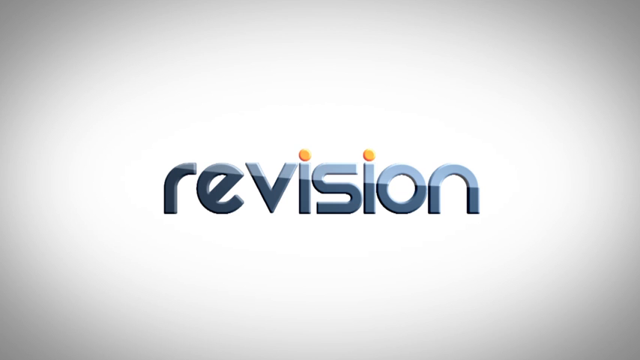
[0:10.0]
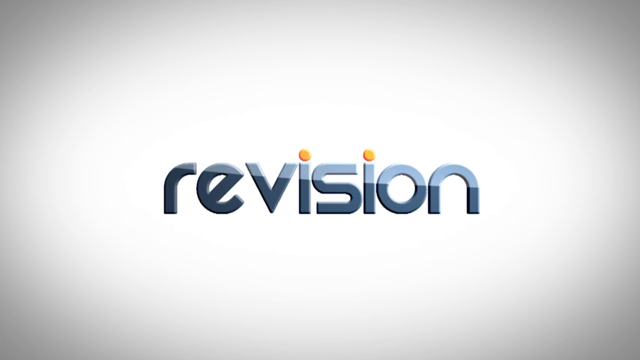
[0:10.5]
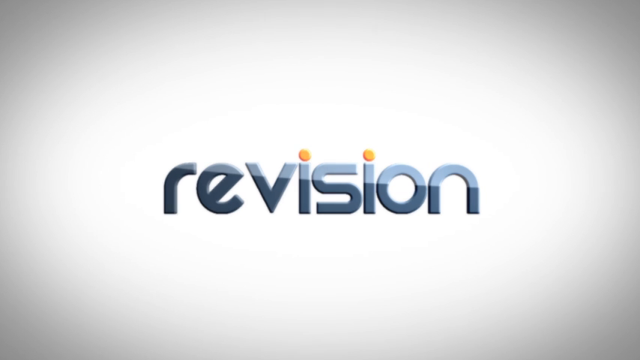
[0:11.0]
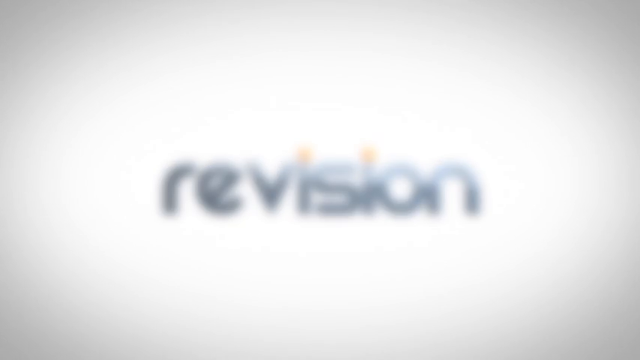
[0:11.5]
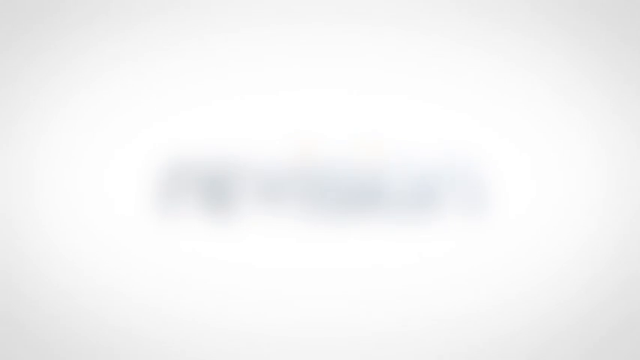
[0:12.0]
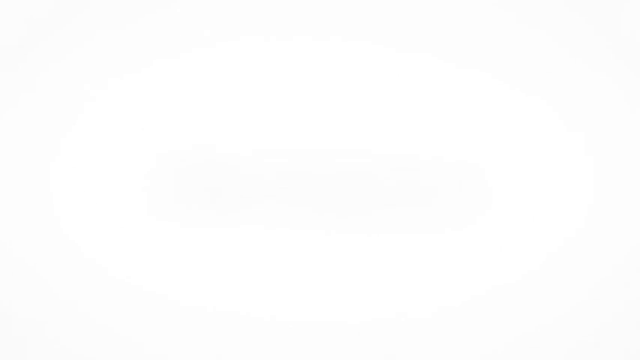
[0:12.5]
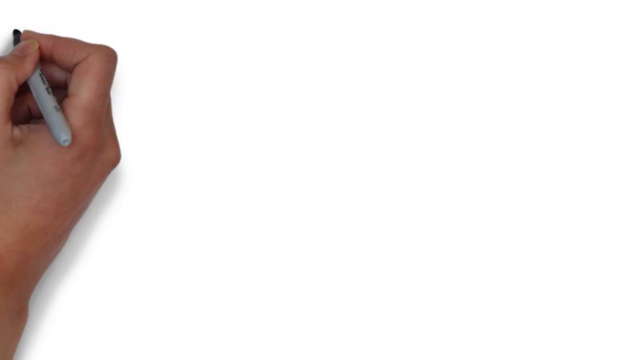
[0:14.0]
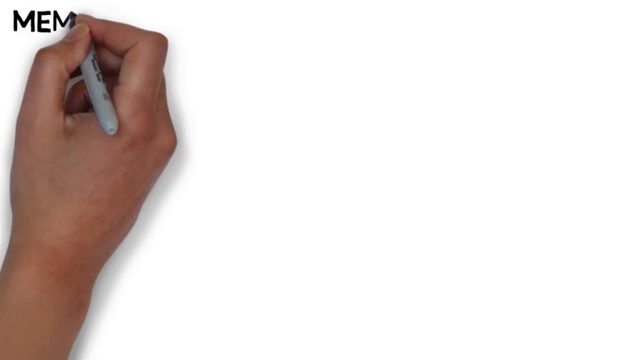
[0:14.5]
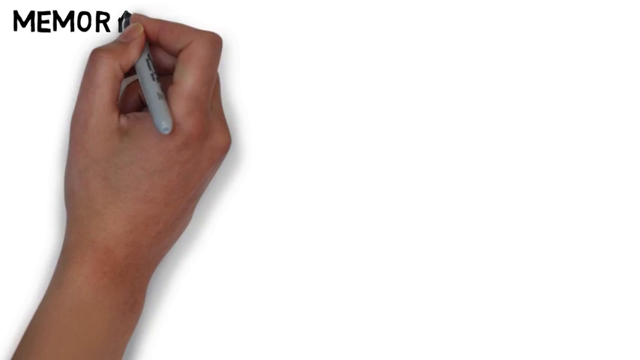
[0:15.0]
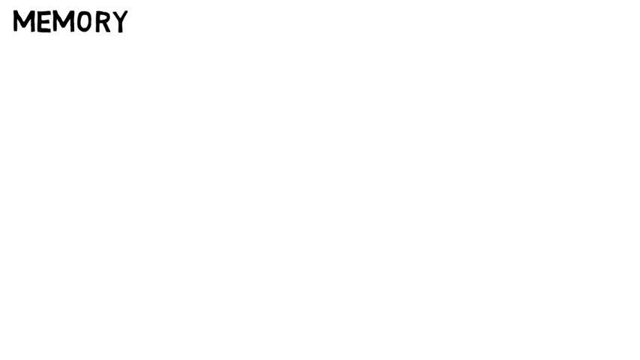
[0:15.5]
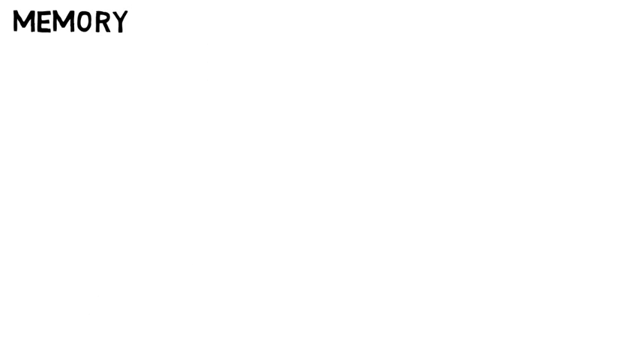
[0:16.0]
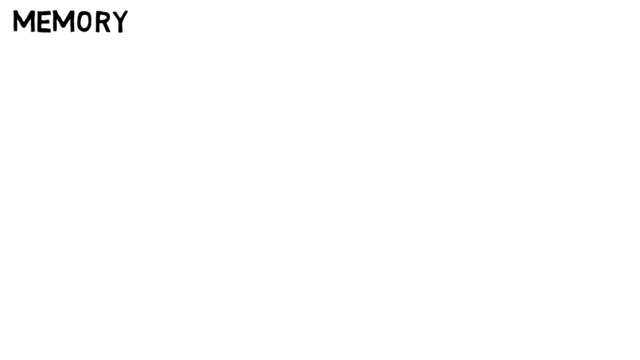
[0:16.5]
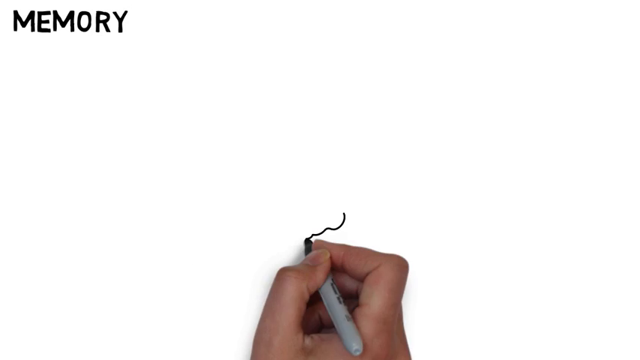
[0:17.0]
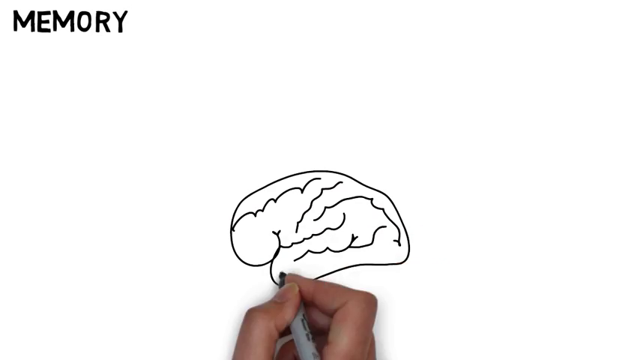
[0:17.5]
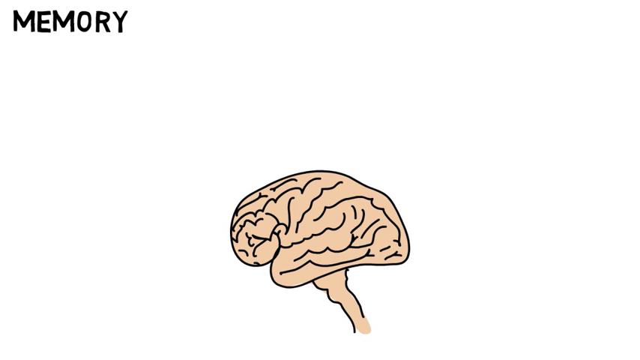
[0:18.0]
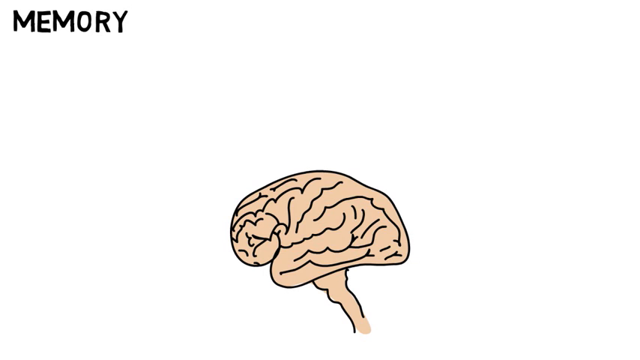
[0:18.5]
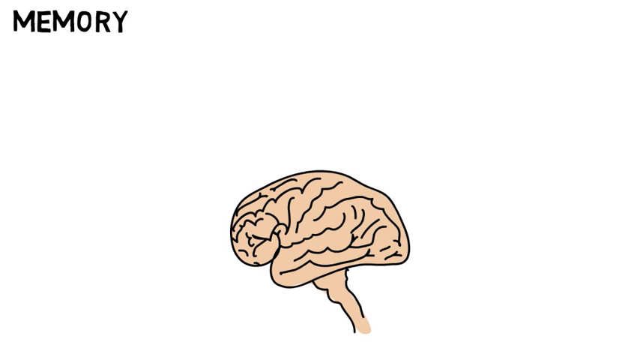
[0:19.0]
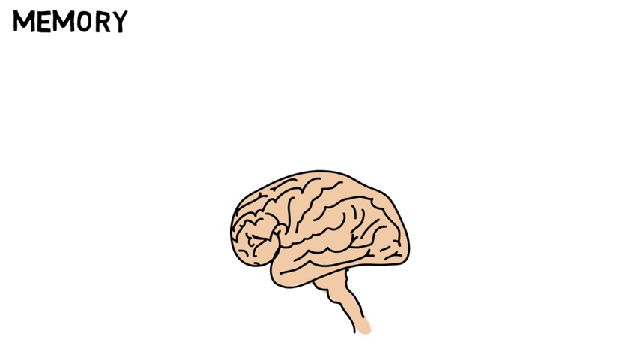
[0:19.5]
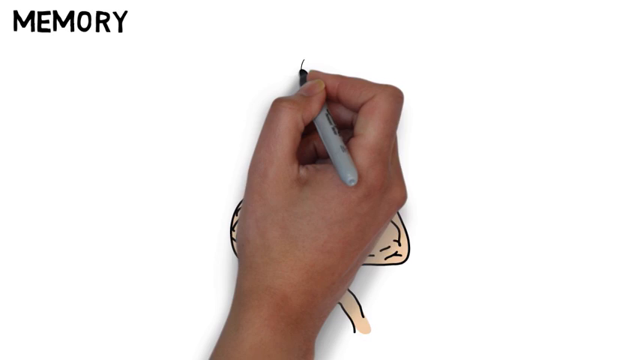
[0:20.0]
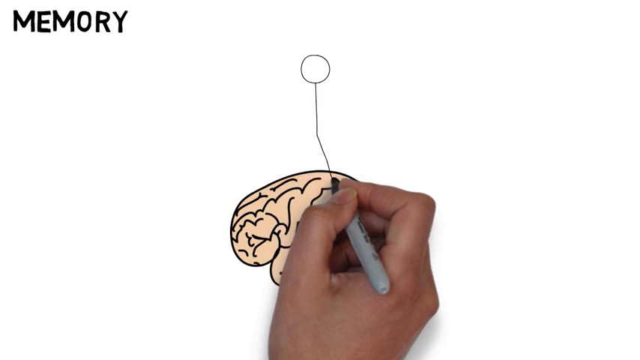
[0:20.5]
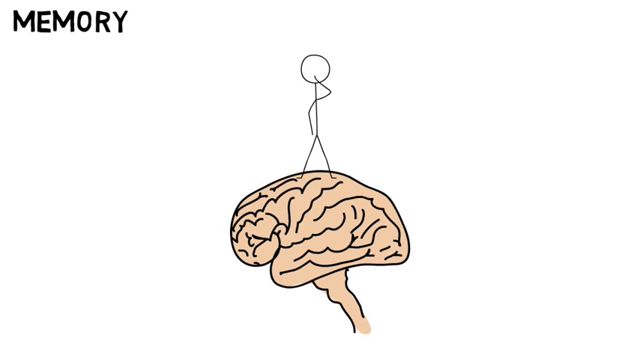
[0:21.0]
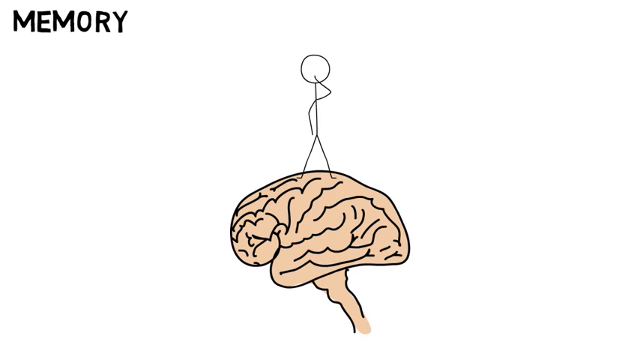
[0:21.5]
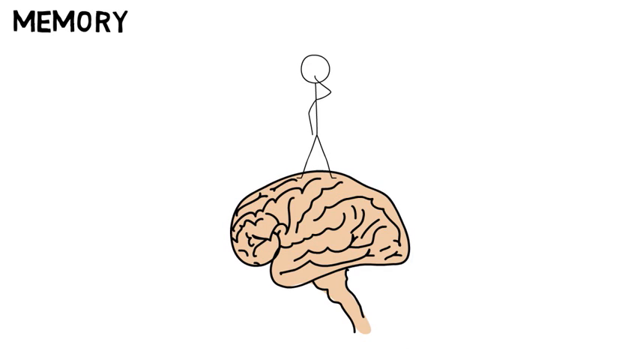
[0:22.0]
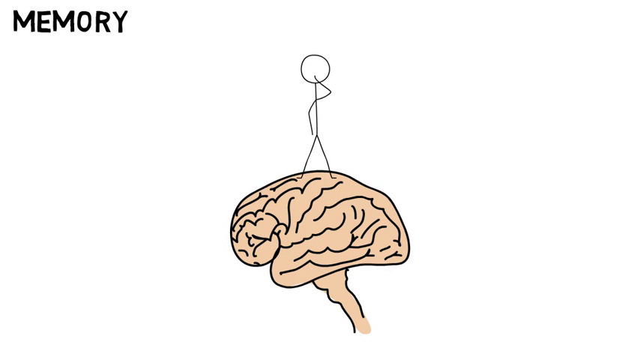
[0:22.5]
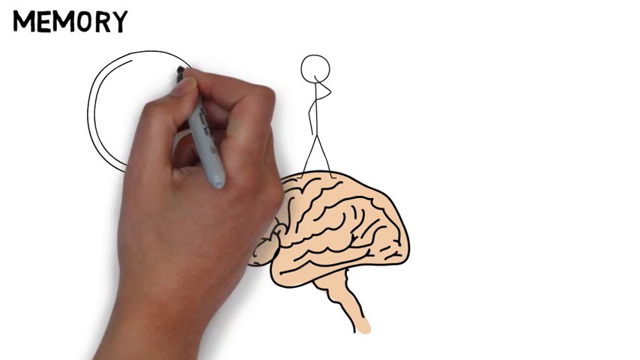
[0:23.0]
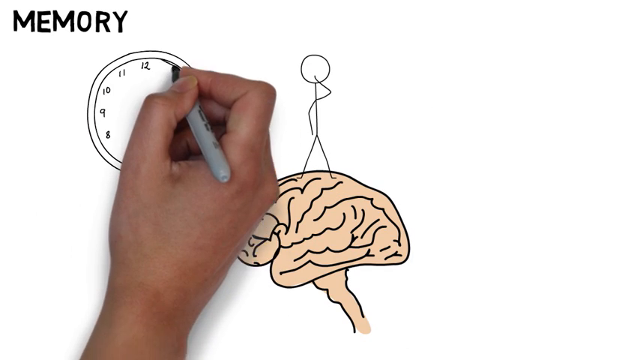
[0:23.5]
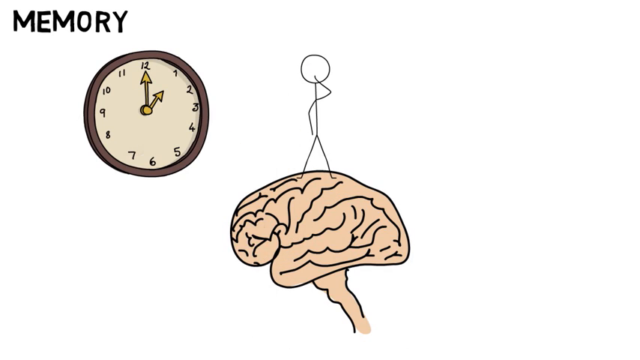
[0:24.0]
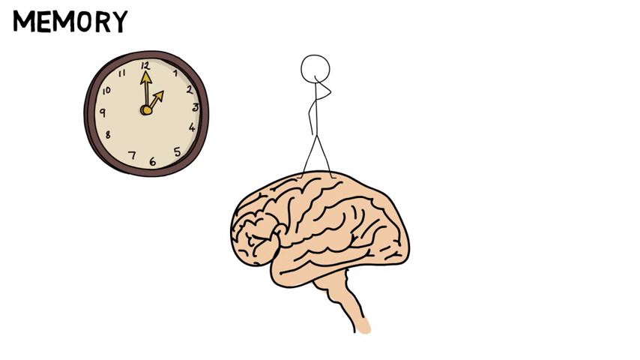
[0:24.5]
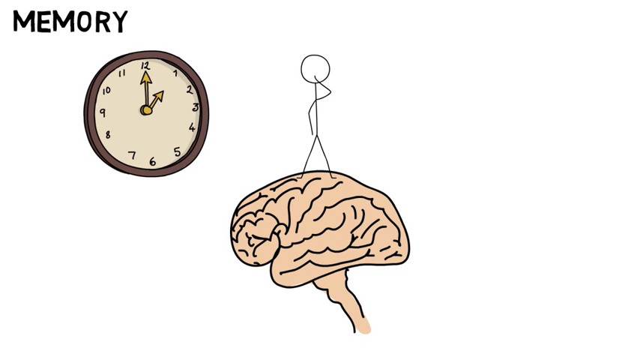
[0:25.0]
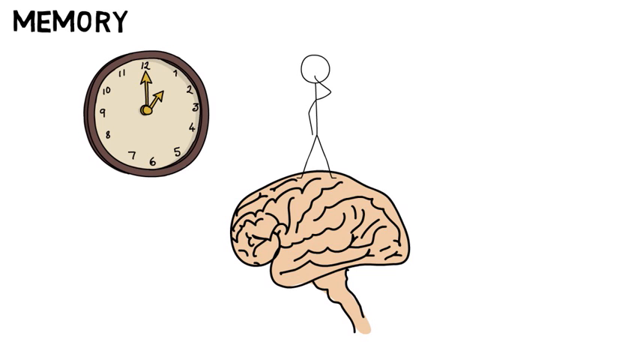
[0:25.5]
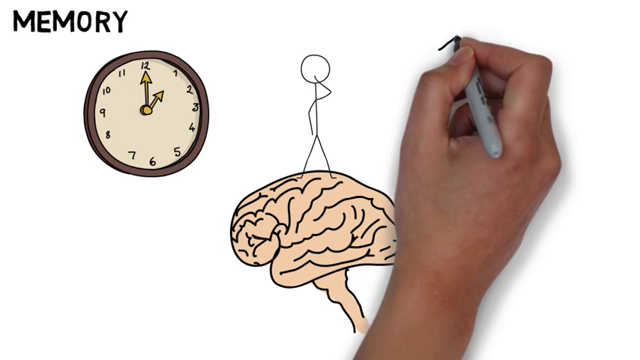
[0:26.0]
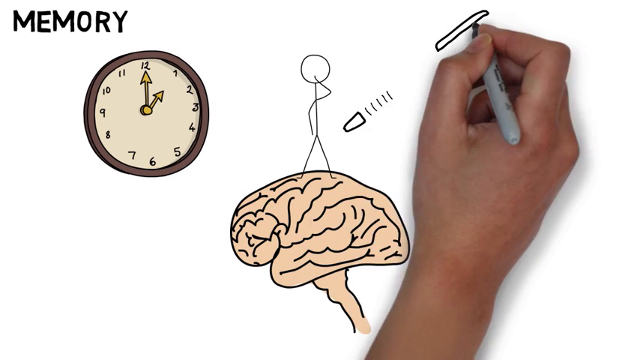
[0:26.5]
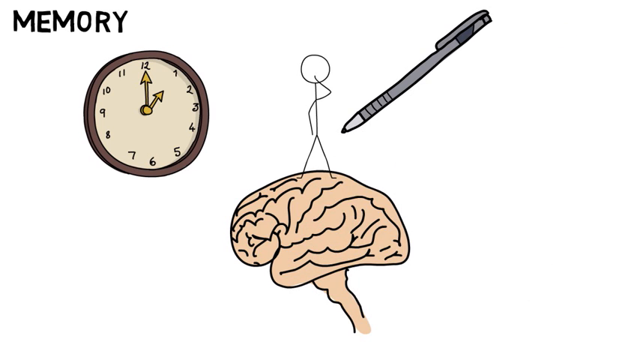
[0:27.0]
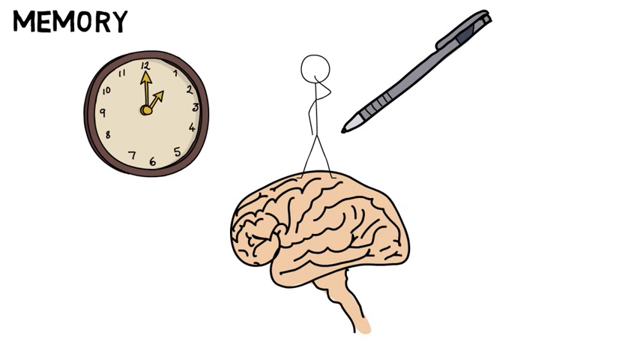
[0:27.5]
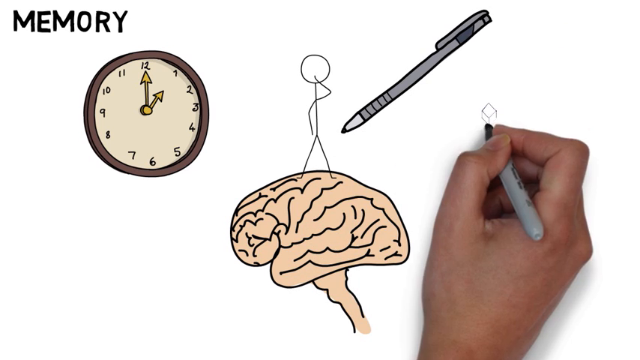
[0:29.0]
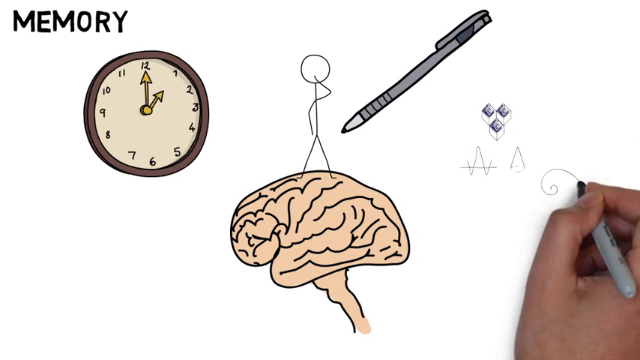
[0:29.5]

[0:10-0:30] The word "revision" fades away in a transition animation. A hand then writes the word "memory" in bold black capital letters in the upper left corner of the screen. The hand draws brown brains with a wire person on top of them, then a clock with grey borders and yellow hands showing one o'clock. It also draws a grey pen pointing at the wire person and the brains. Next, the hand draws shapes in what looks like a mathematics-grid book, including a cylinder, a half circle and some 3D shapes with cubes, and then everything goes away.